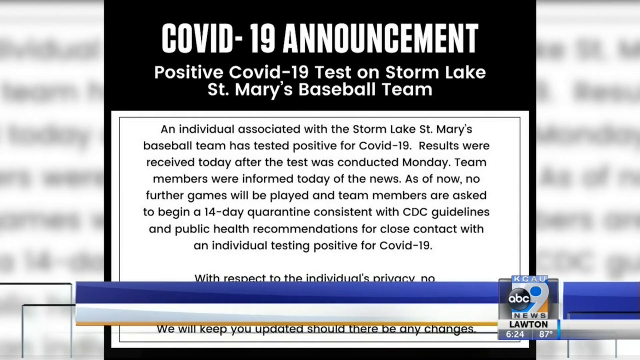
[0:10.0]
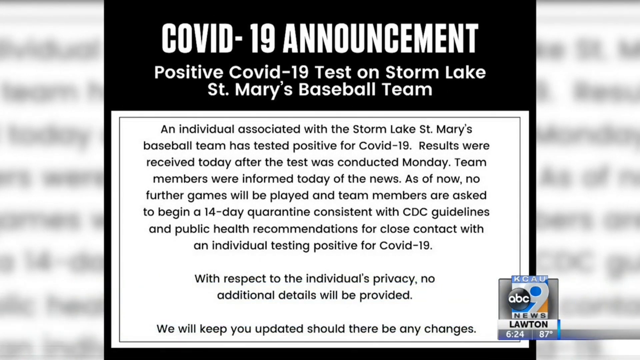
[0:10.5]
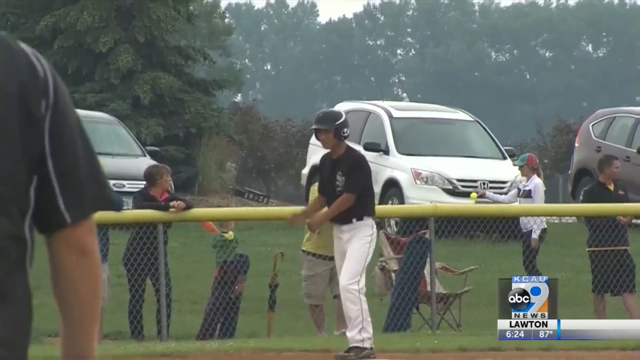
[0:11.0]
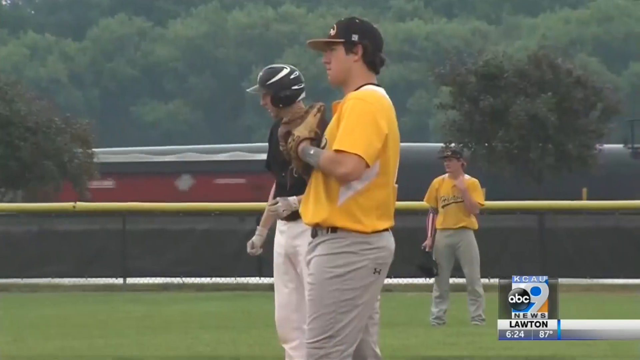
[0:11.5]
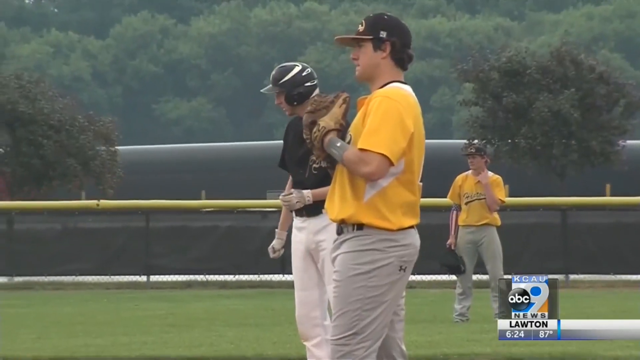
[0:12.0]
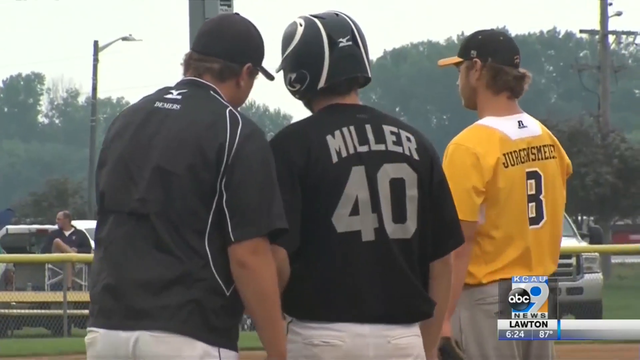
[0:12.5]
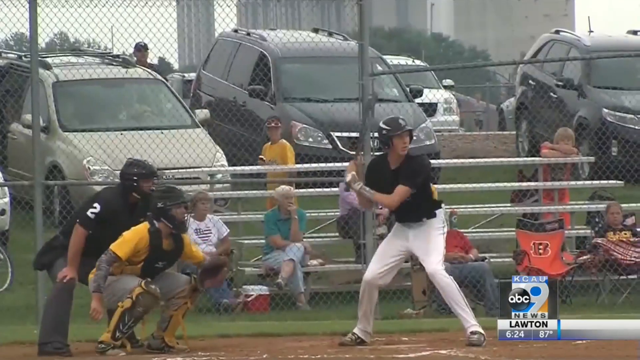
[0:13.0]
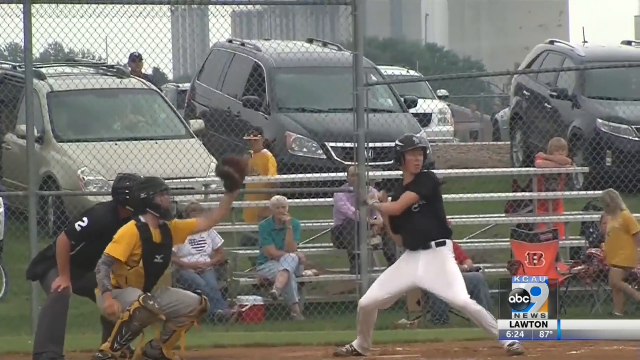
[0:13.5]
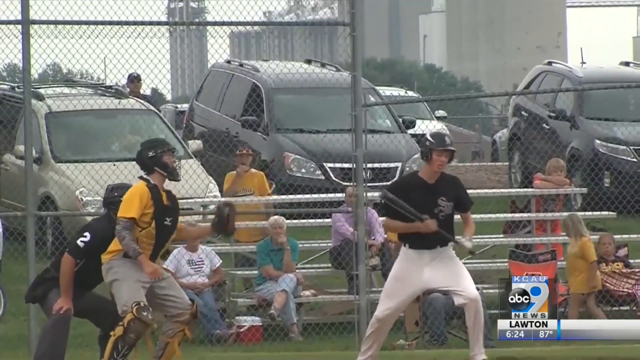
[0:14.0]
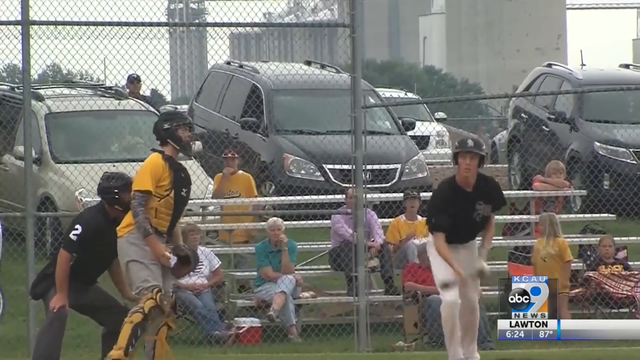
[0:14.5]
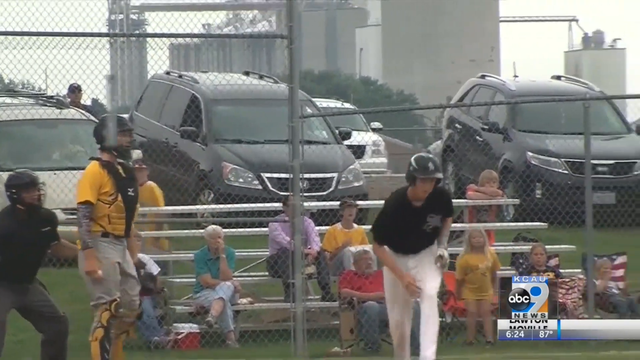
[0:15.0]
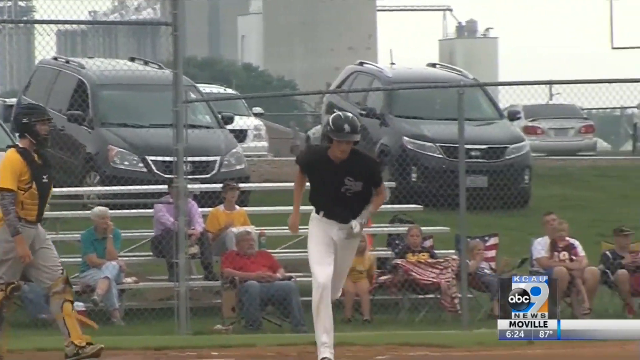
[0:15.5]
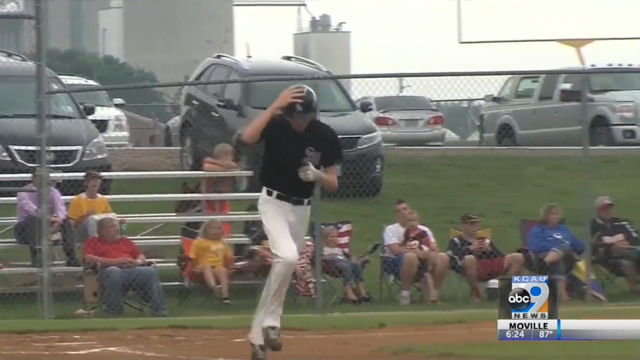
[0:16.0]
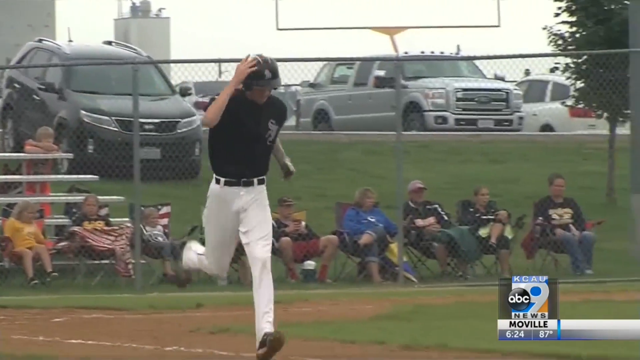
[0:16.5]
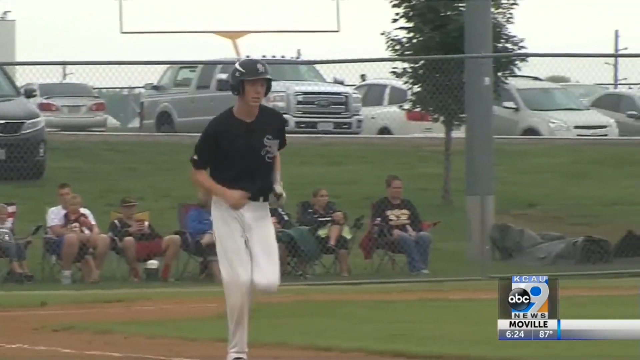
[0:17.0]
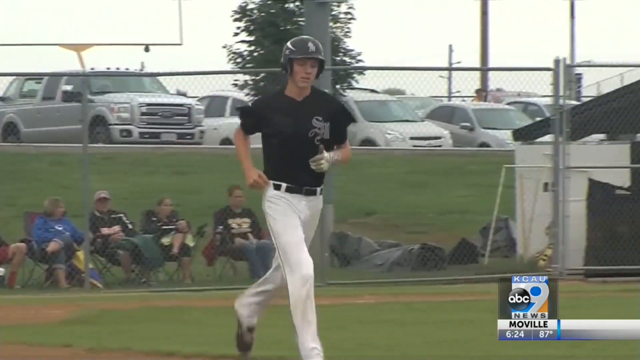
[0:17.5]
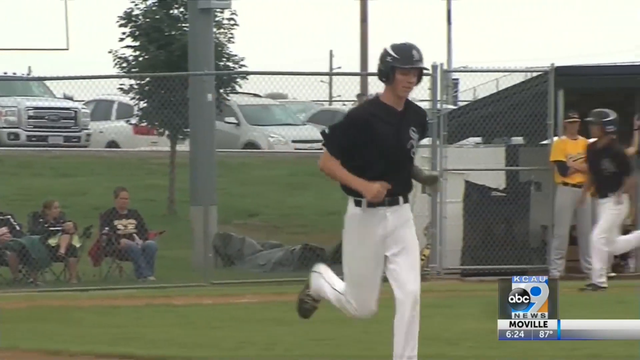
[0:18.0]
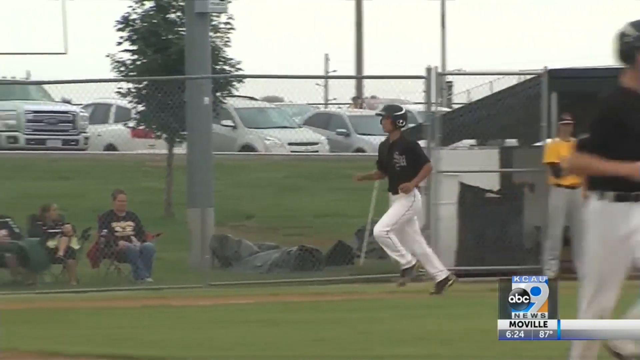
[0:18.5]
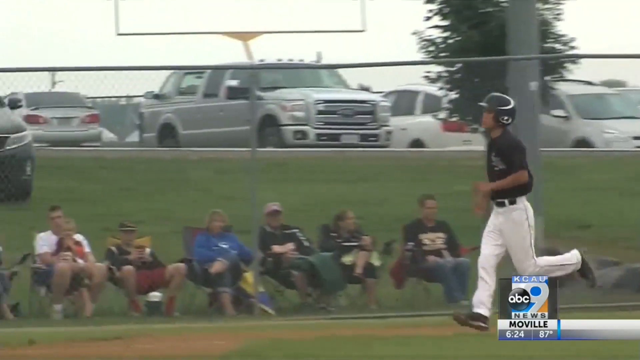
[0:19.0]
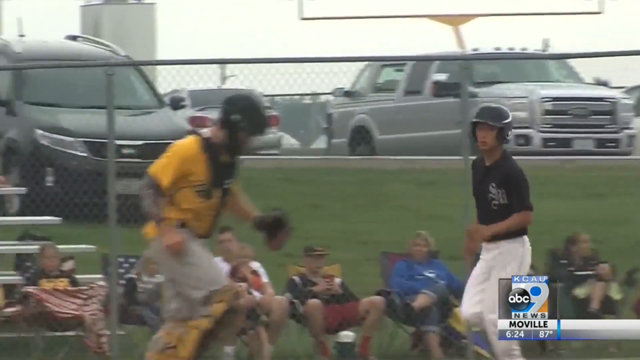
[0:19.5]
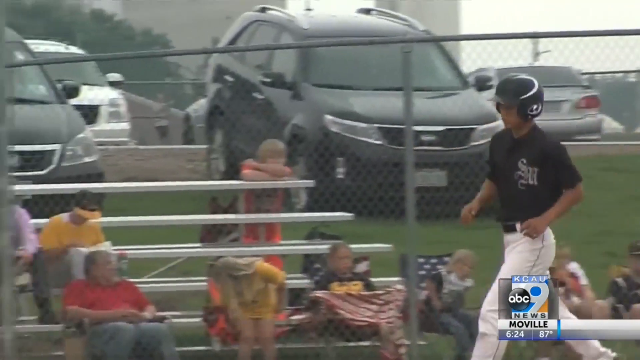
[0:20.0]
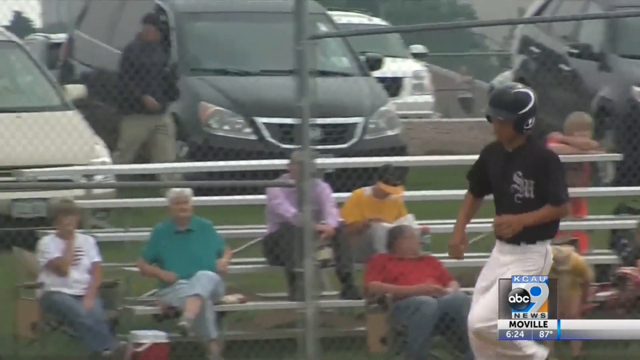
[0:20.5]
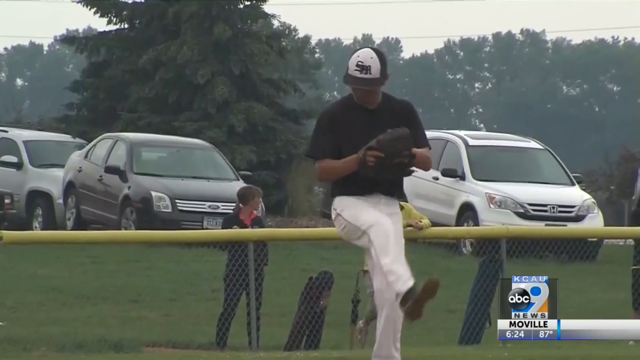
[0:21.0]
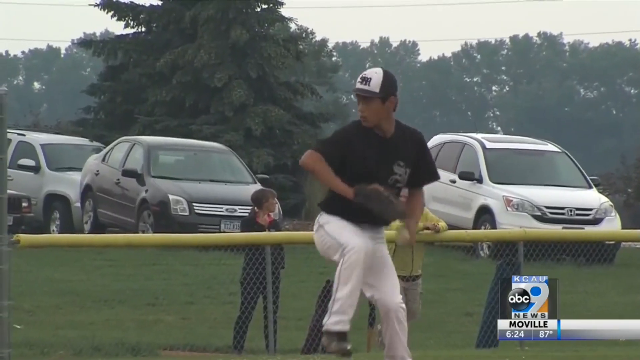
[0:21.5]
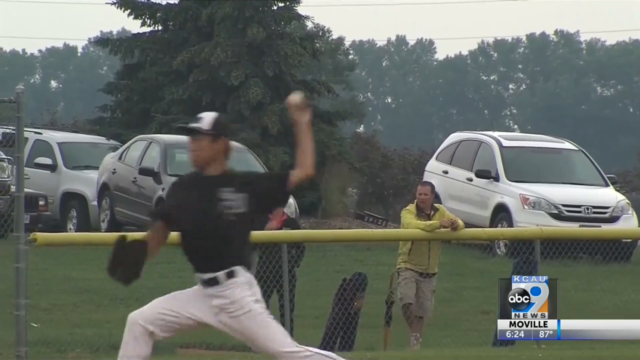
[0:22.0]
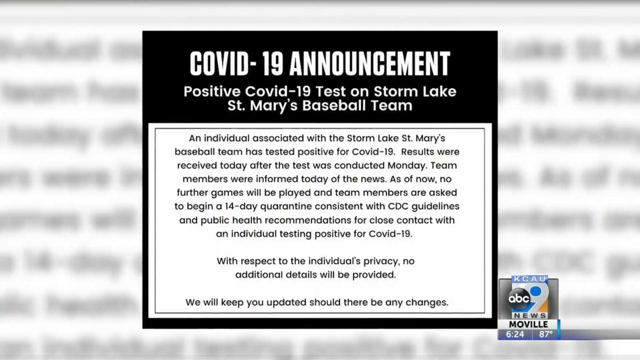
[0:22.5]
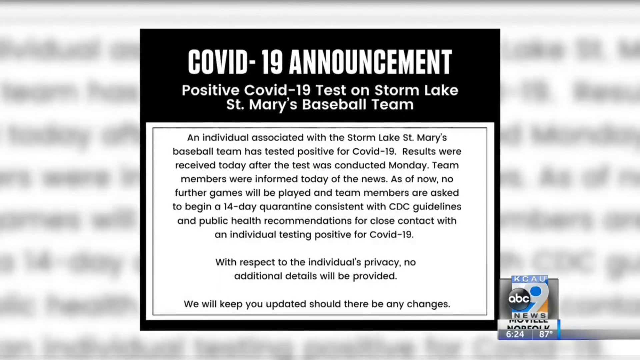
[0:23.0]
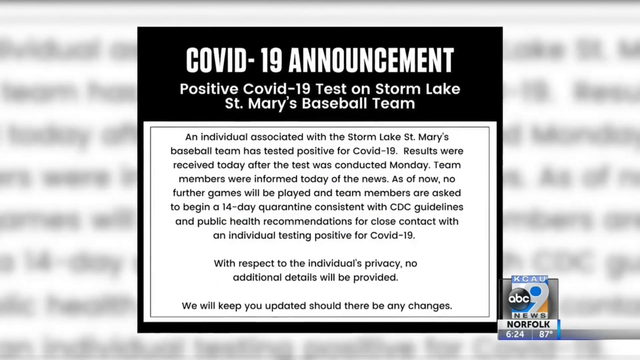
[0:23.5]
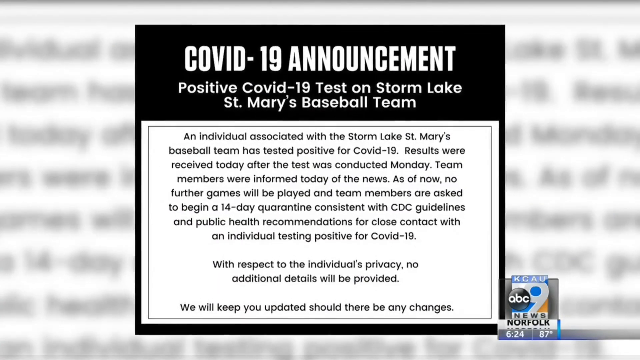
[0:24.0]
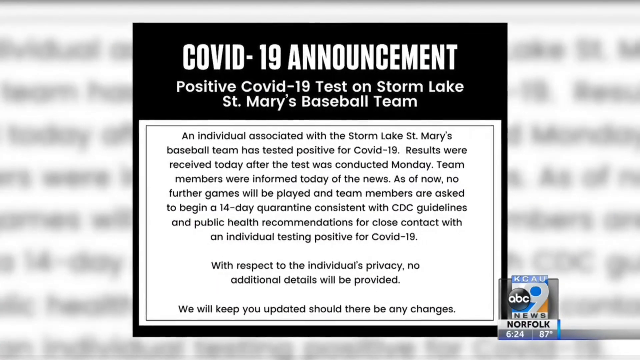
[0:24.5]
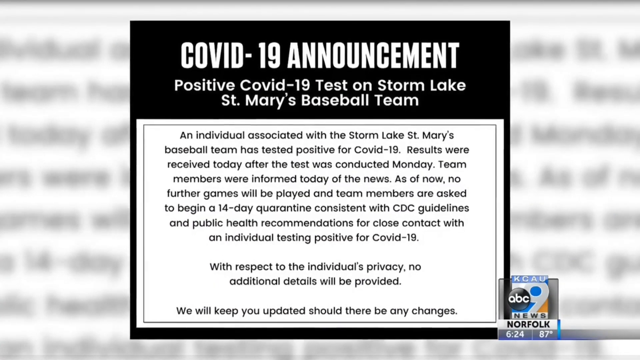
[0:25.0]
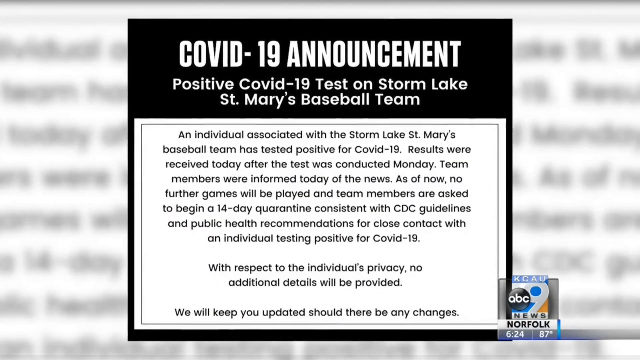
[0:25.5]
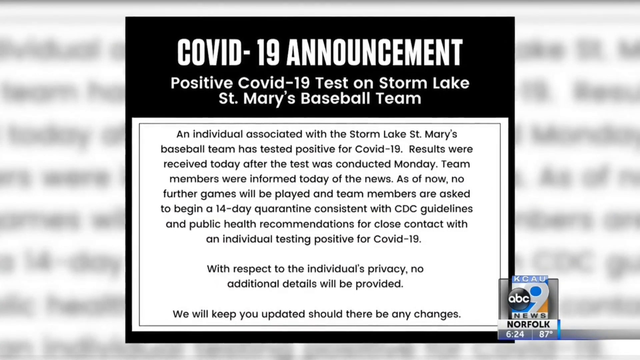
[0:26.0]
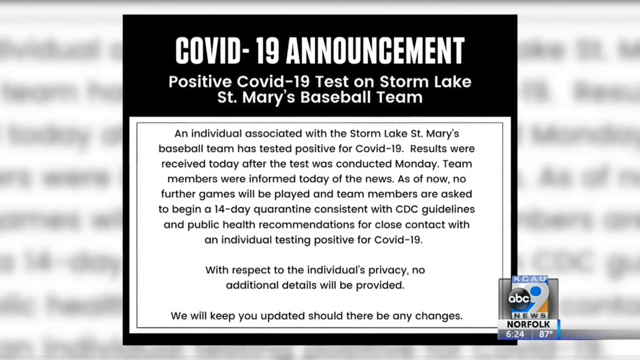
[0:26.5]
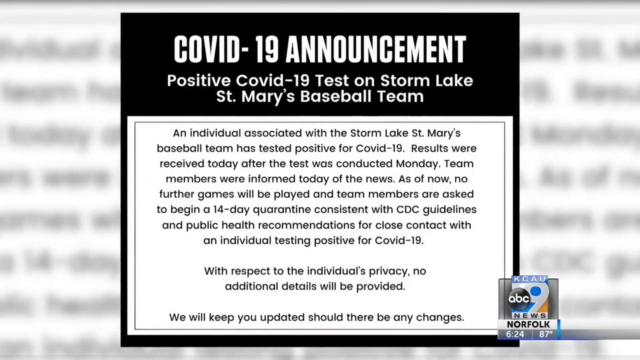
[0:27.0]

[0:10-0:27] The on-screen announcement about one of the Storm Lake St. Mary's baseball players being infected with COVID-19 remains on screen, along with the banner stating that the player has tested positive and that the season has been canceled. After a few seconds the video cuts away to baseball action, presumably showing the St. Mary's team playing. In the first shot someone is standing on the bases, and a batter takes a high pitch and runs to first base, pushing in a run since the bases were loaded. The St. Mary's team is dressed in navy or black, and the opposing team is dressed in yellow. After a few seconds of baseball footage, the video cuts back to the COVID-19 announcement, which states that a positive test by one of the Storm Lake St. Mary's baseball players has led to the cancellation of the rest of the season. The broadcast is from an ABC News affiliate, KCAU, and the city appears to be Lawton. A banner at the bottom of the screen again announces the cancellation of the remainder of St. Mary's baseball season as a result of one player testing positive for COVID-19.